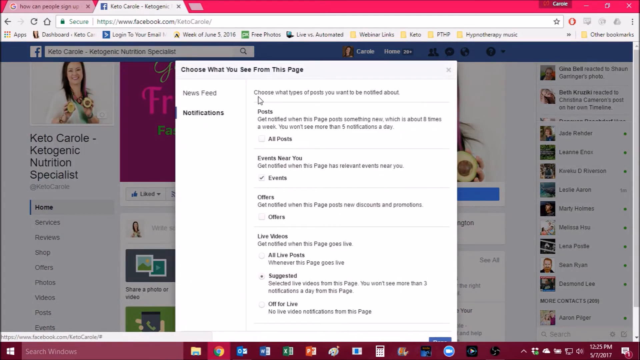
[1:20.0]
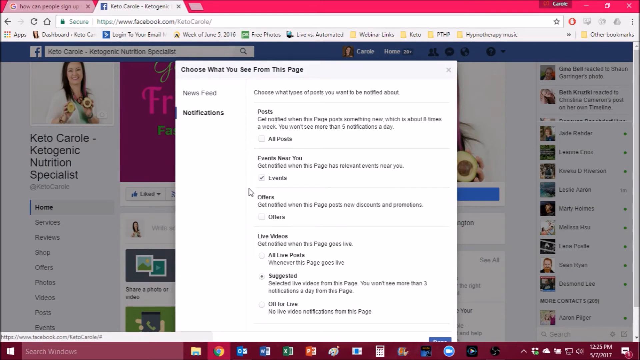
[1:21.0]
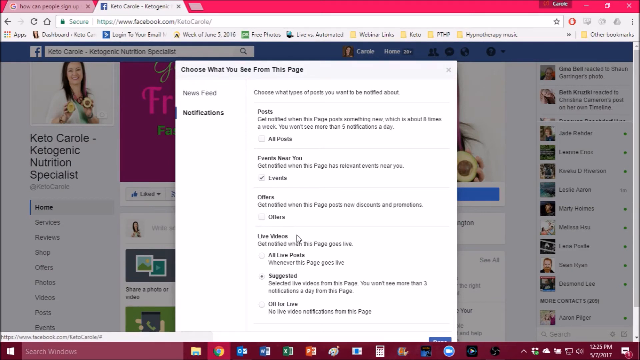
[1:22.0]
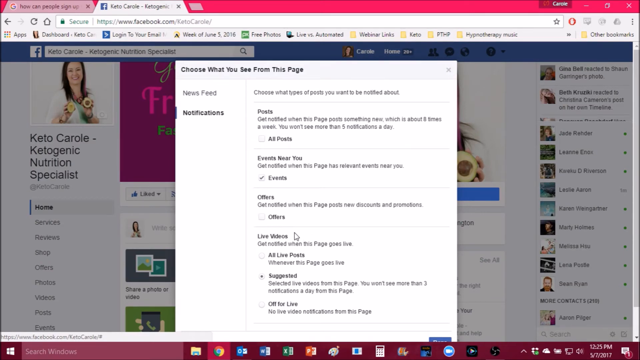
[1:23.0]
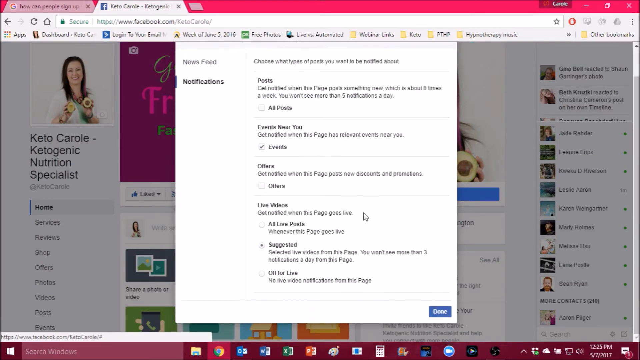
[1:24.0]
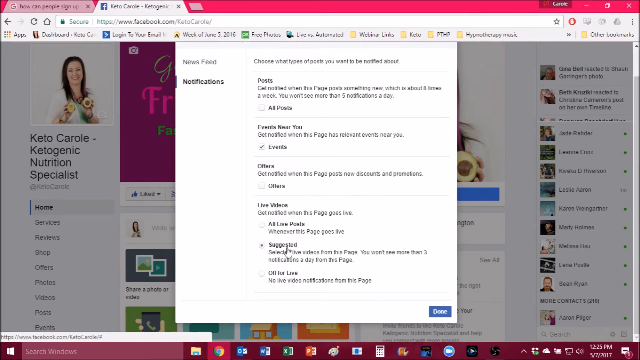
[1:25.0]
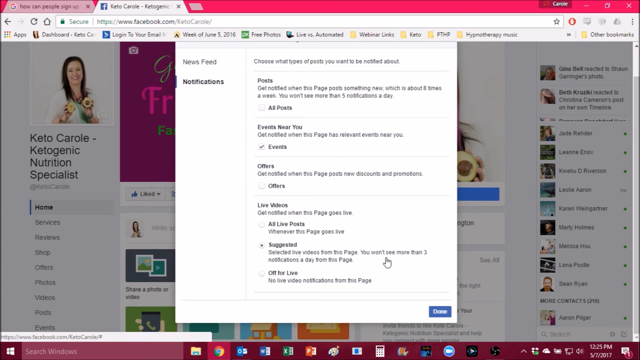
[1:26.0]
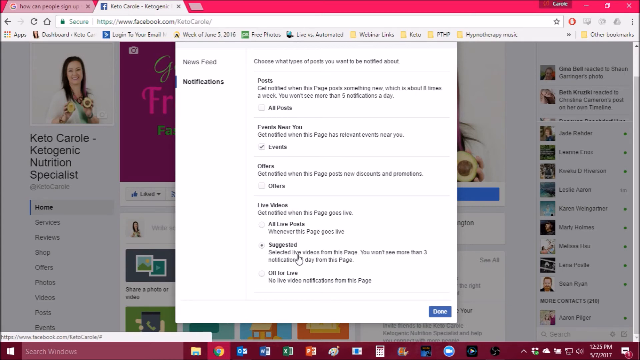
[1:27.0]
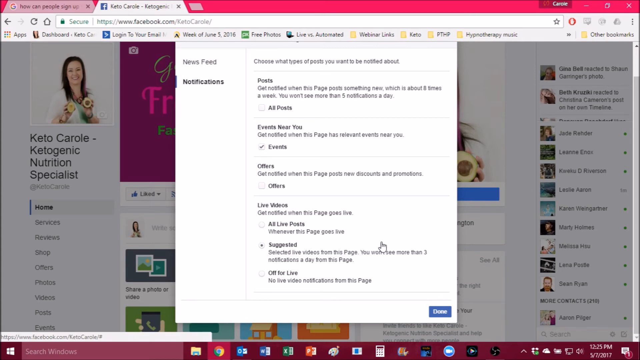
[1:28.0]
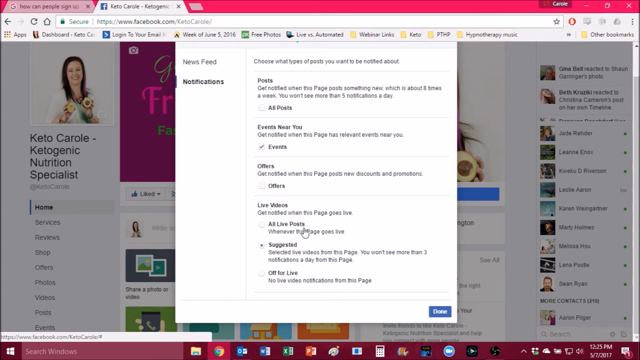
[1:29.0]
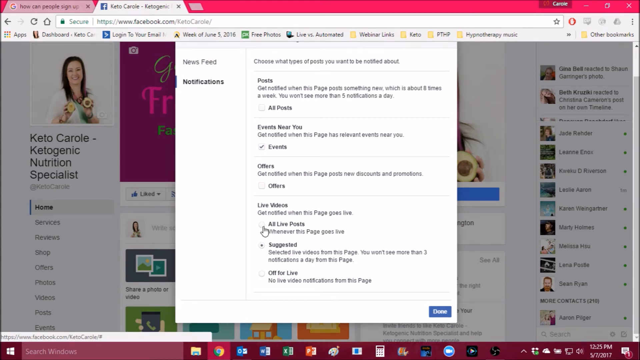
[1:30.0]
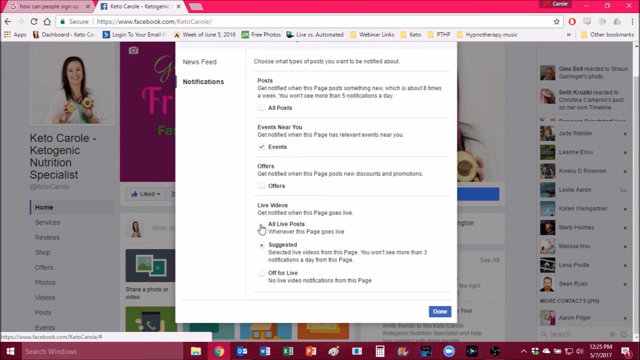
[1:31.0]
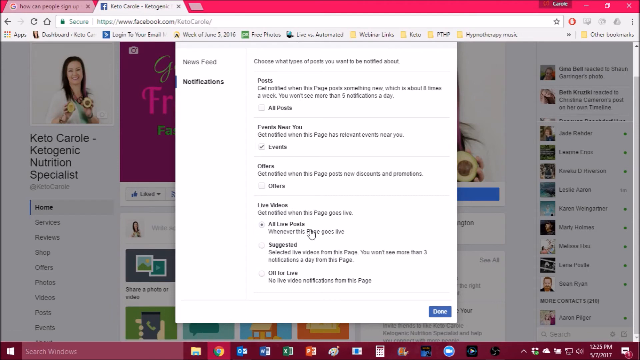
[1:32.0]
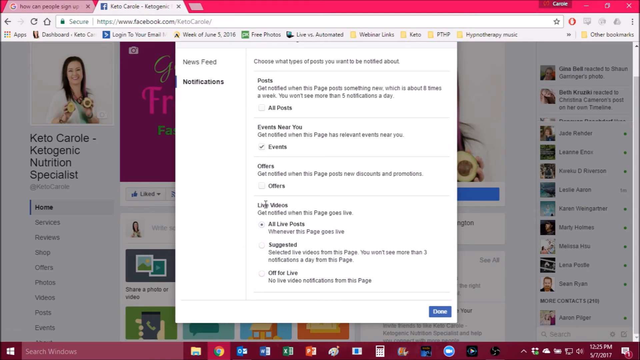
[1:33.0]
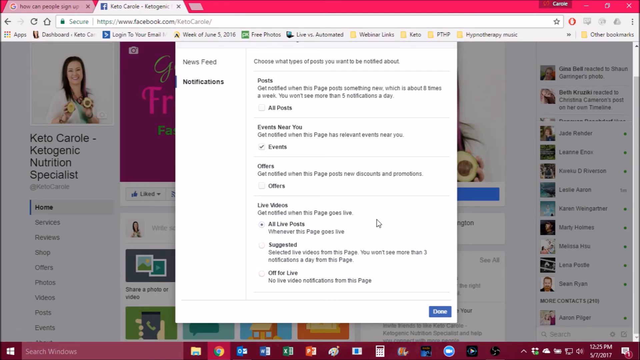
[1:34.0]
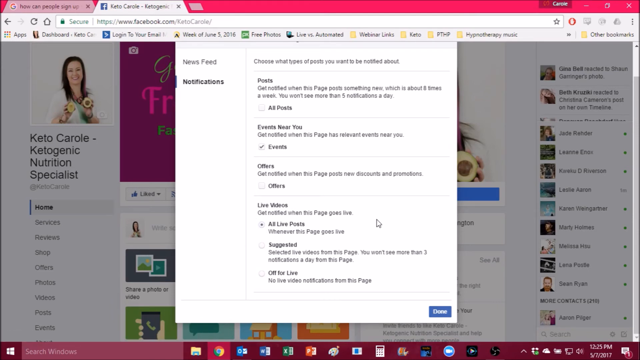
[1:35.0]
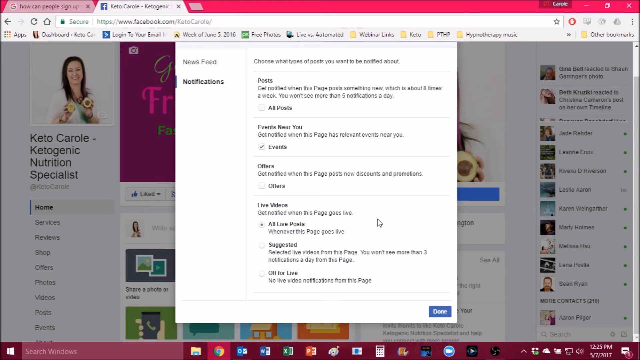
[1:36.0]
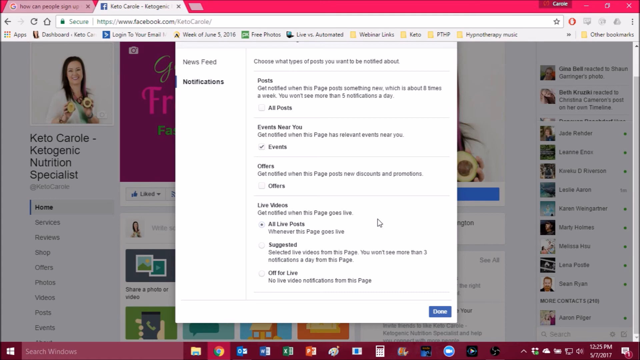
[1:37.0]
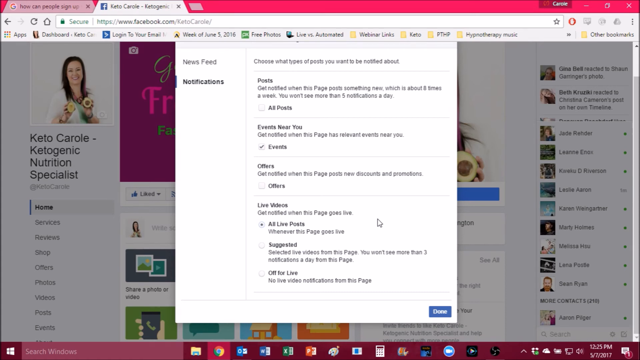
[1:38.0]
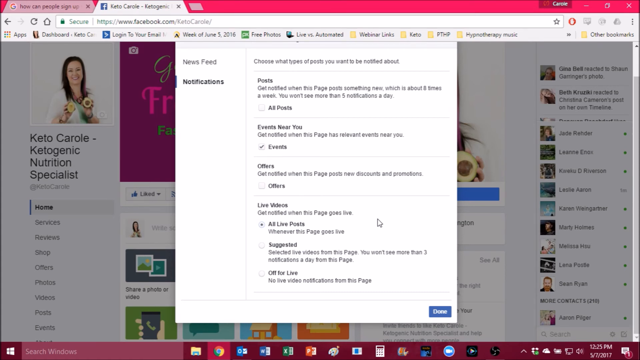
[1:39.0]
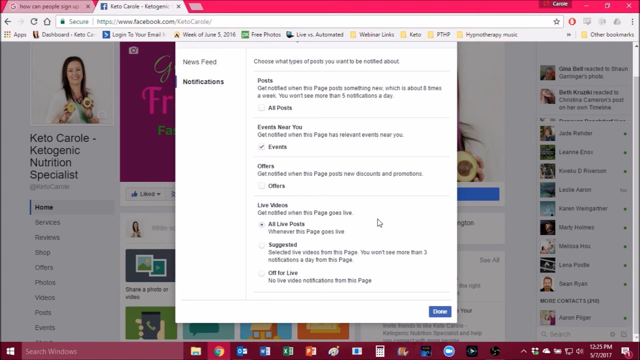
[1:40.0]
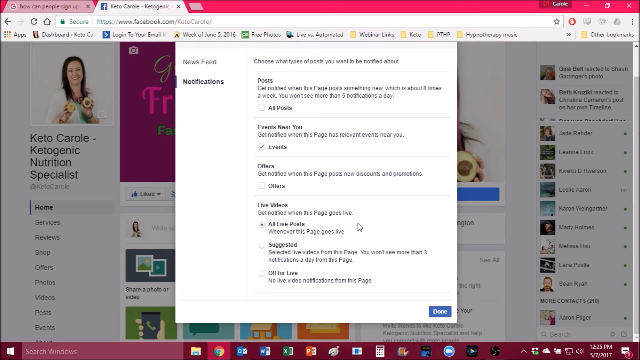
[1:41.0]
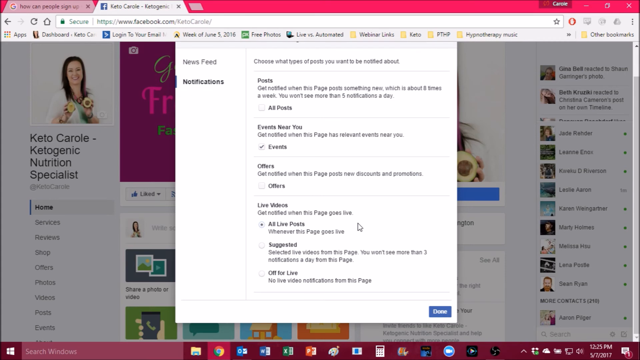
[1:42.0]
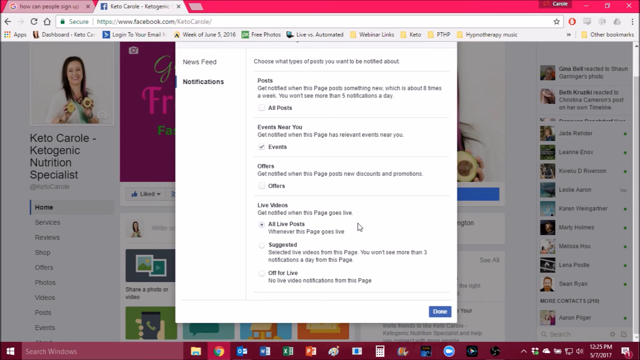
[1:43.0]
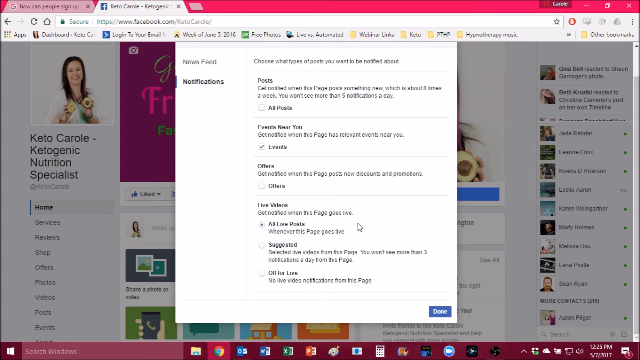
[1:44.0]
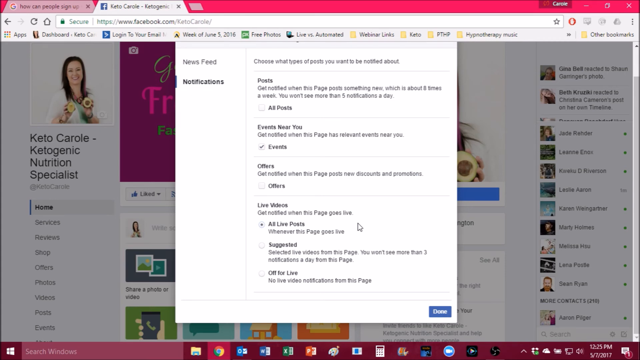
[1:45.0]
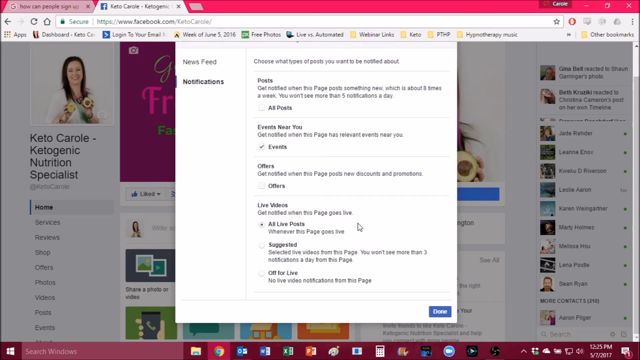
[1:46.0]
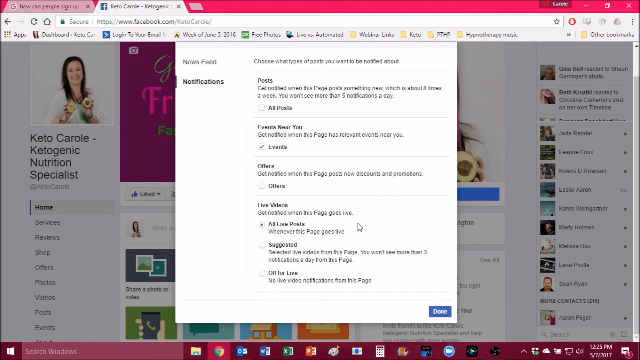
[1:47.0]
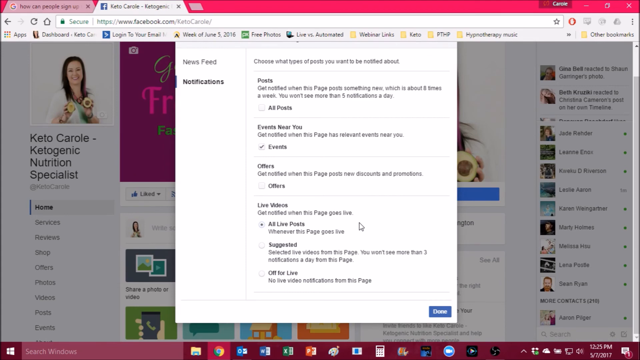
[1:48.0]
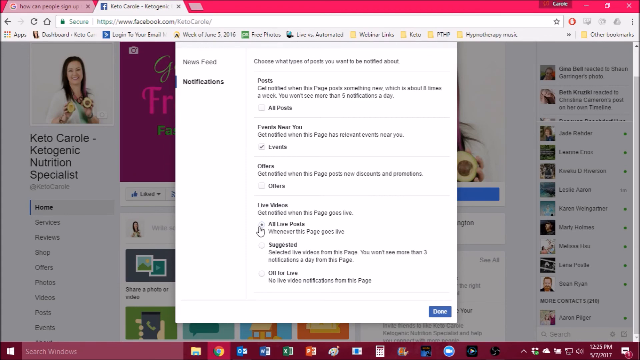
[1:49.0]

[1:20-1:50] The notifications box is open. The mouse quickly moves down the options in the box, including posts, events near you, offers, and live videos. The cursor briefly moves counterclockwise in a circle over the live videos title, then kind of scrolls down to show more of the options under the live videos heading. It highlights the suggested option under live videos and moves from left to right over its text several times, seemingly as if someone might be narrating what the section contains. It then moves up a bit to the option above suggested, all live posts, highlights the selector next to it, and clicks the little selector circle, selecting it. The cursor then moves counterclockwise over the all live posts section, as if to emphasize it.